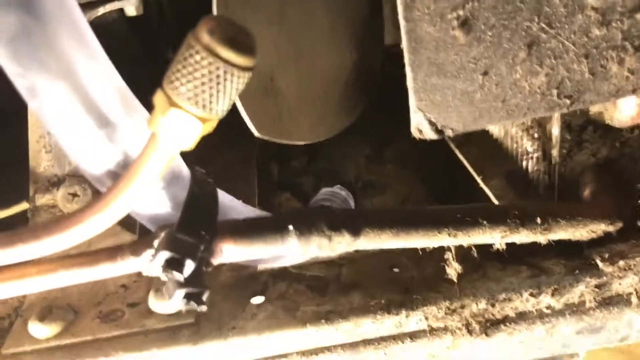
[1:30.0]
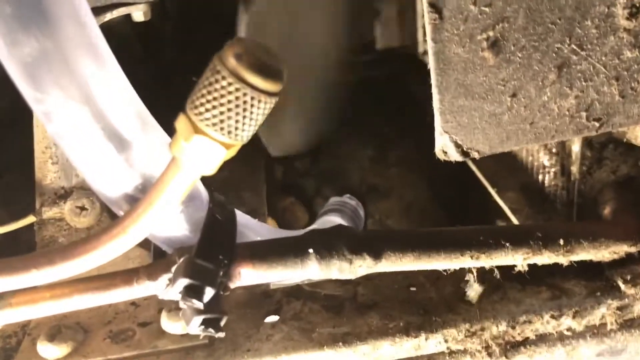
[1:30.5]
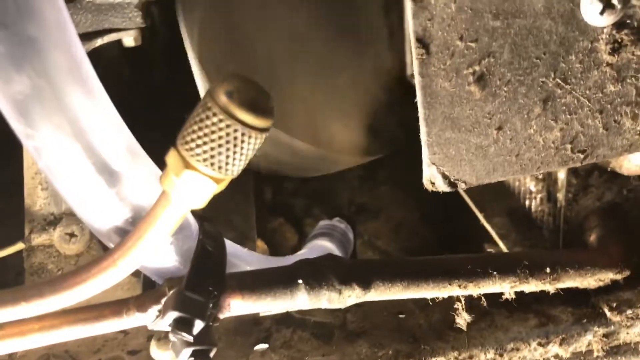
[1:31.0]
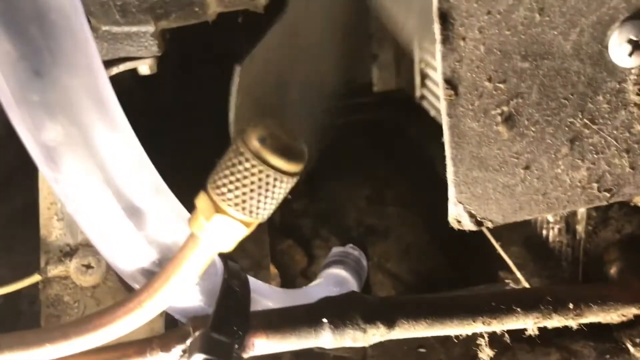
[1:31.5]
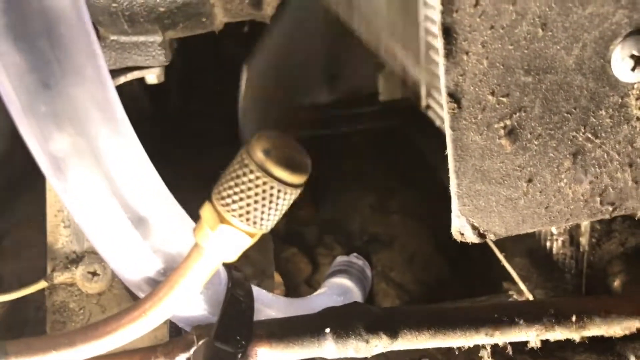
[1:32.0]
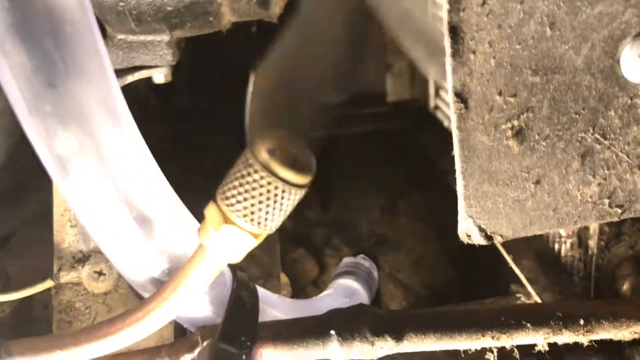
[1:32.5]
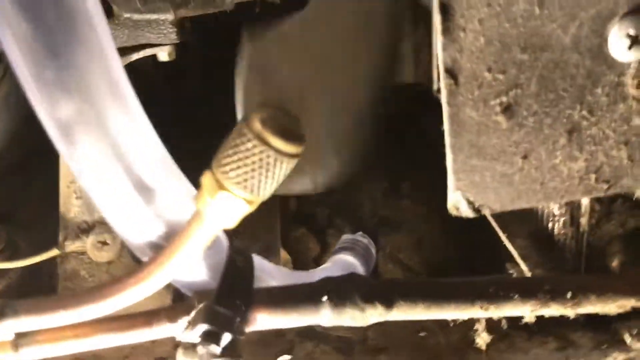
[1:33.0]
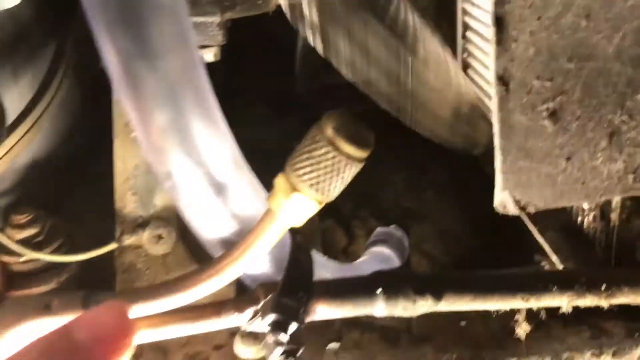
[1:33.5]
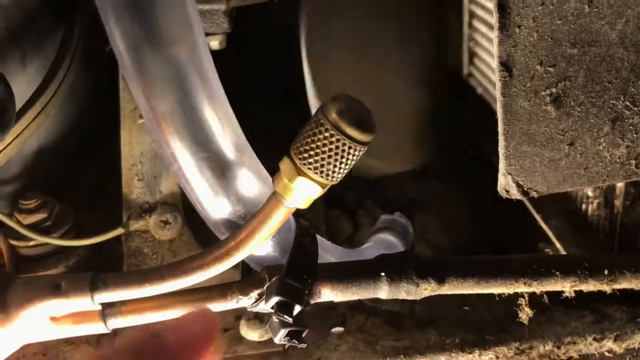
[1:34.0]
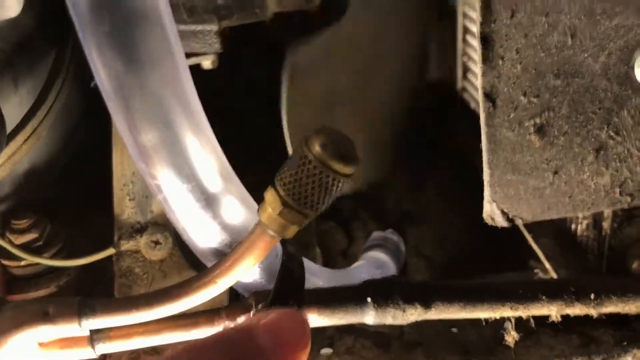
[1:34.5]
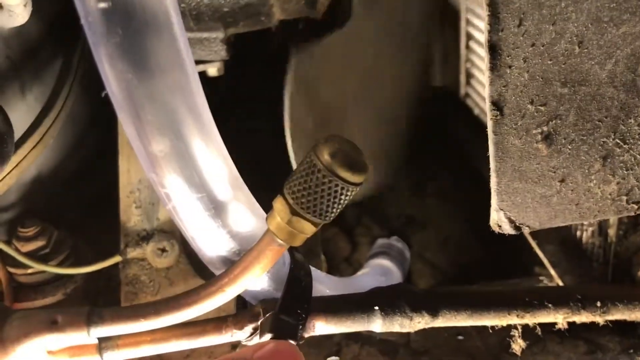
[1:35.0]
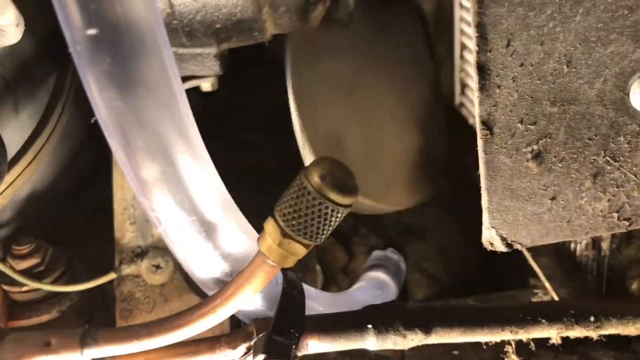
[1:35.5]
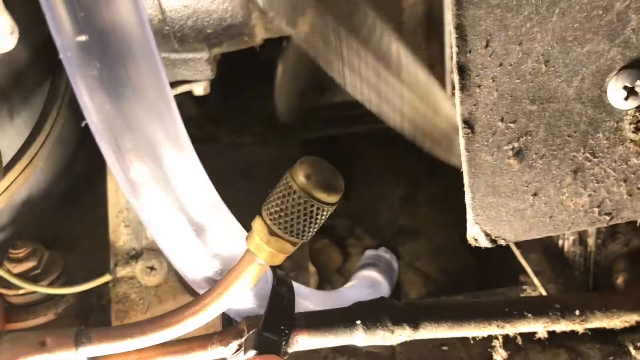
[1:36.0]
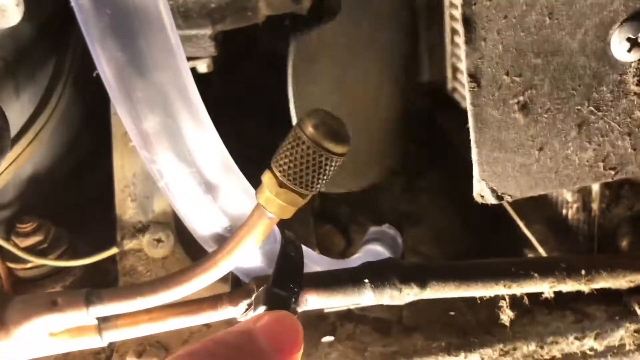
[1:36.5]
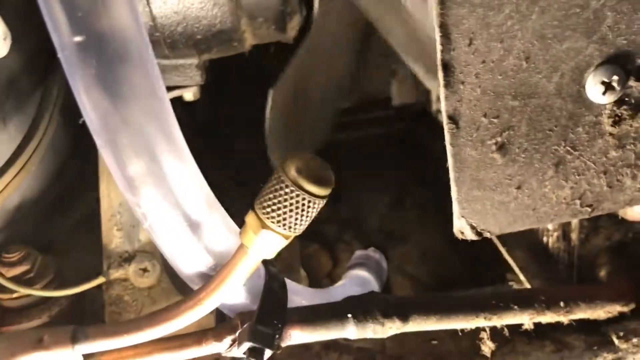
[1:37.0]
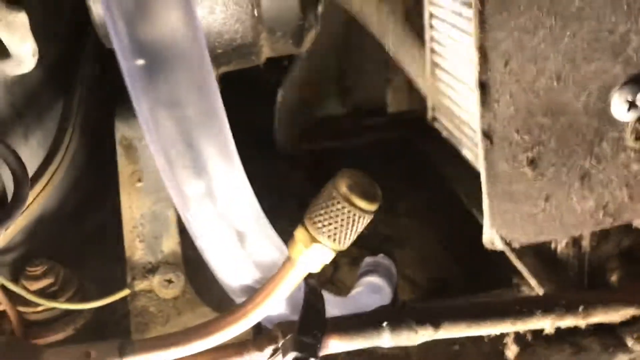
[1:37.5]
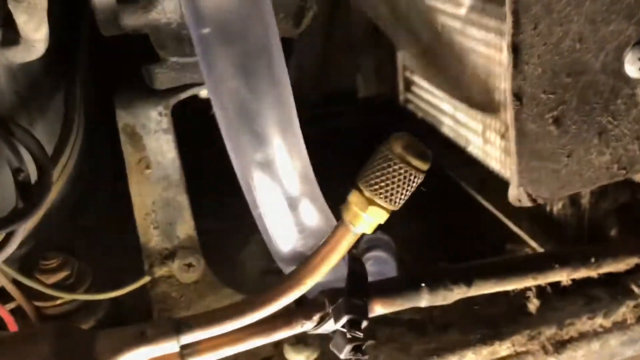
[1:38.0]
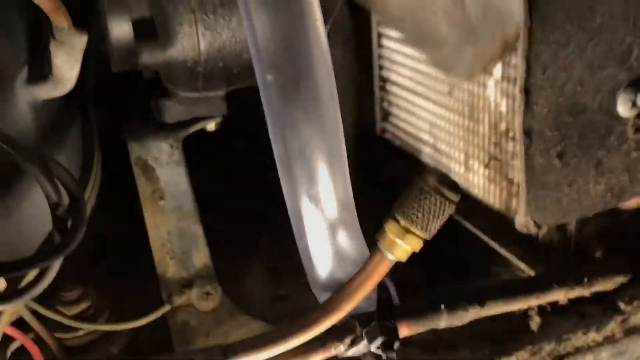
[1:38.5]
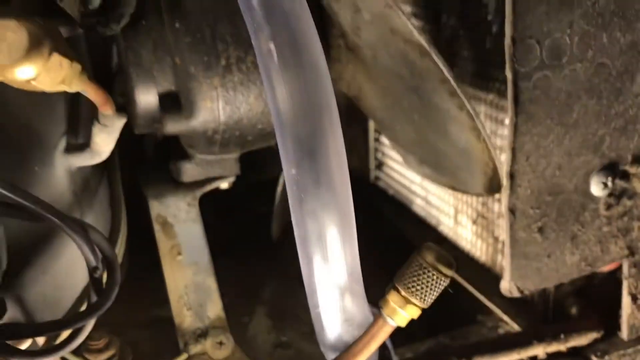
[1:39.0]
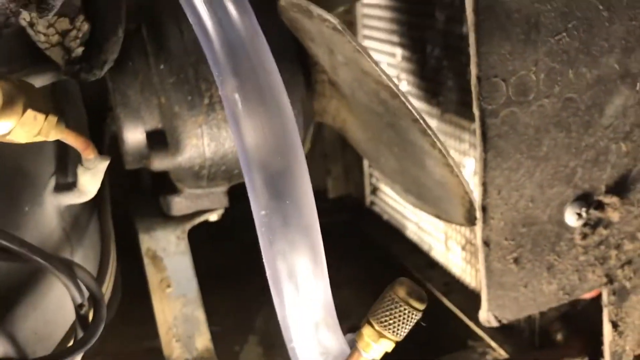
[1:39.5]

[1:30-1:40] As the camera shows where the newly installed clear pipe leads, the fan above it starts to spin. The man points his finger slowly toward the zap strap and the new pipe area, then slowly pans the camera upward toward the fan, showing it fully in frame. As the camera moves up, the fan slowly stops moving. The camera then holds its position on this area.